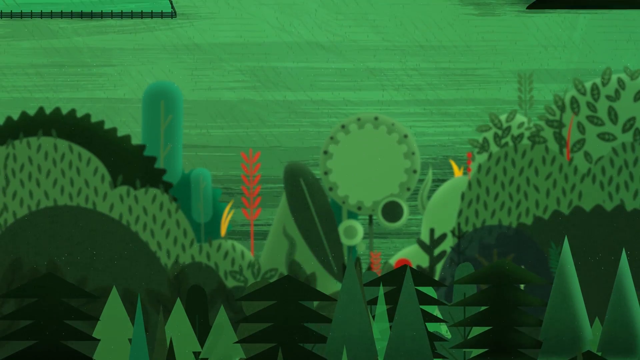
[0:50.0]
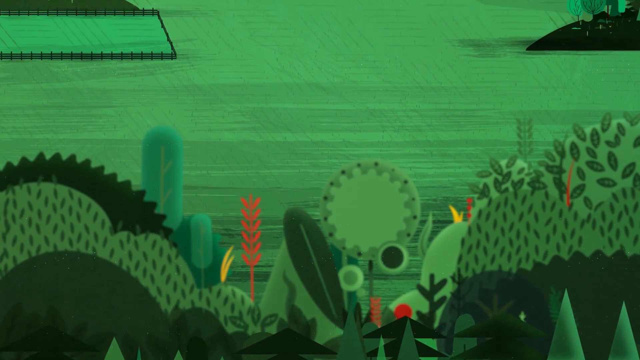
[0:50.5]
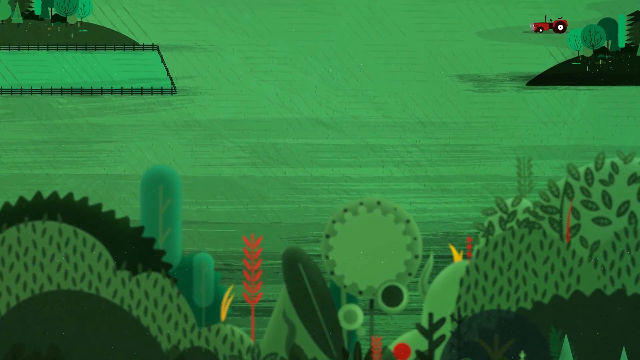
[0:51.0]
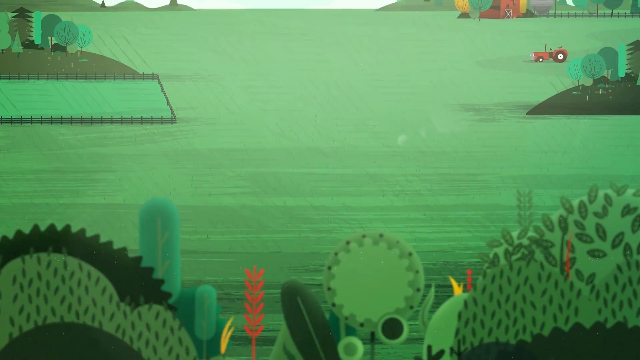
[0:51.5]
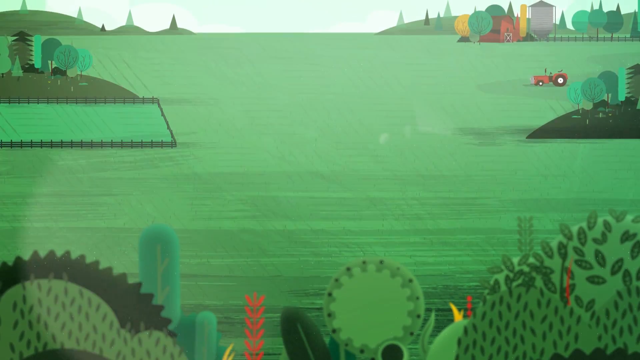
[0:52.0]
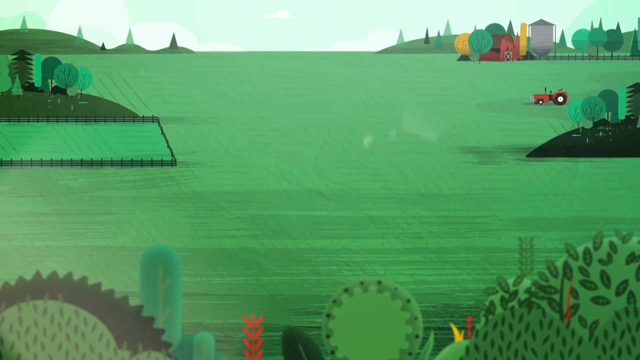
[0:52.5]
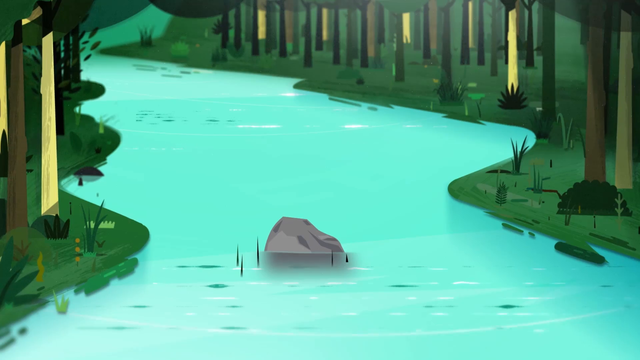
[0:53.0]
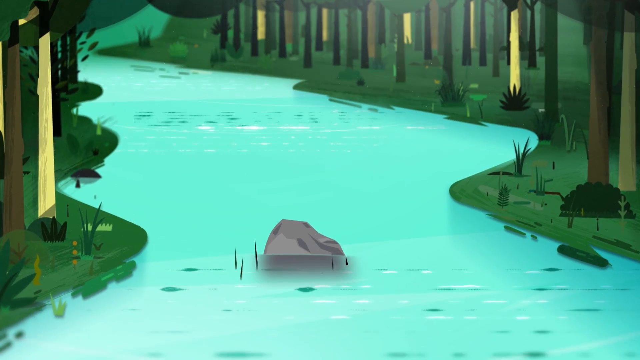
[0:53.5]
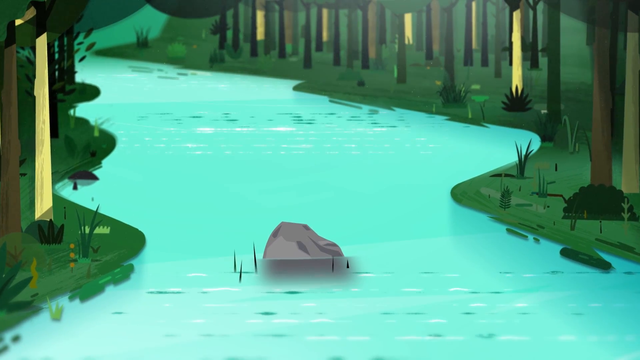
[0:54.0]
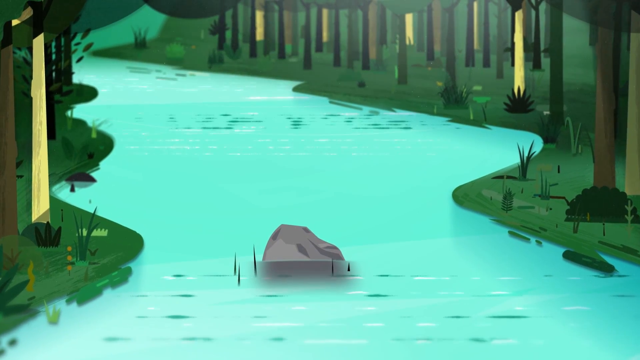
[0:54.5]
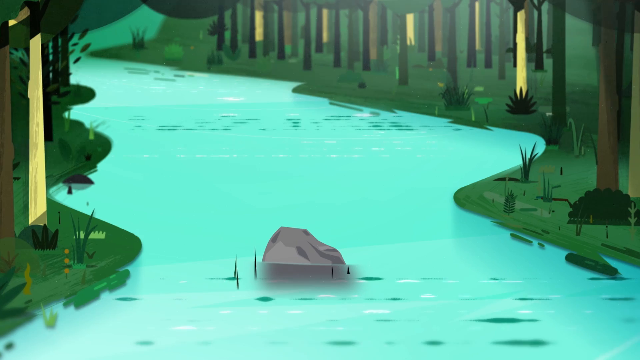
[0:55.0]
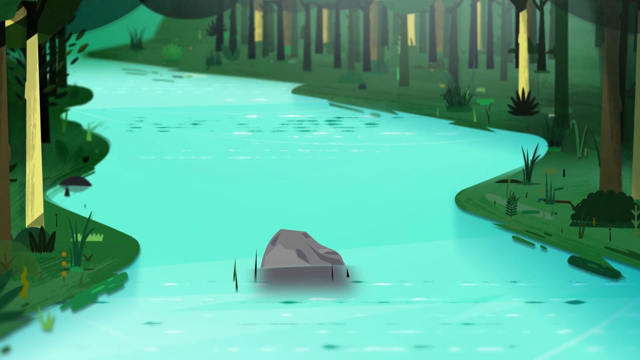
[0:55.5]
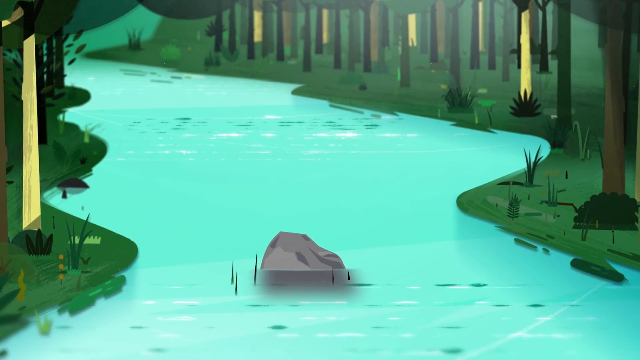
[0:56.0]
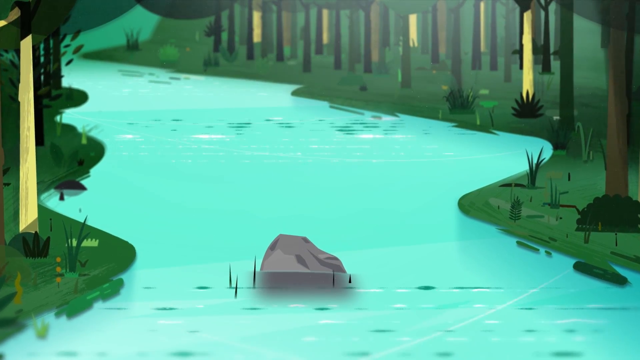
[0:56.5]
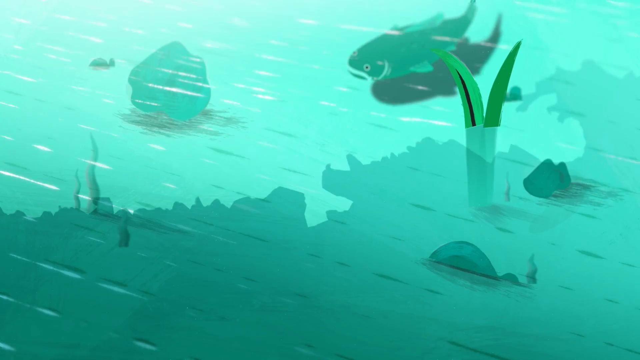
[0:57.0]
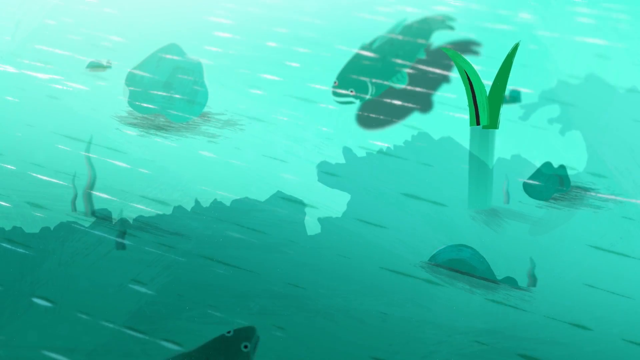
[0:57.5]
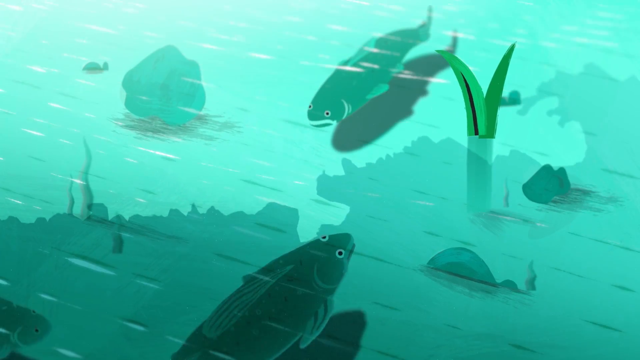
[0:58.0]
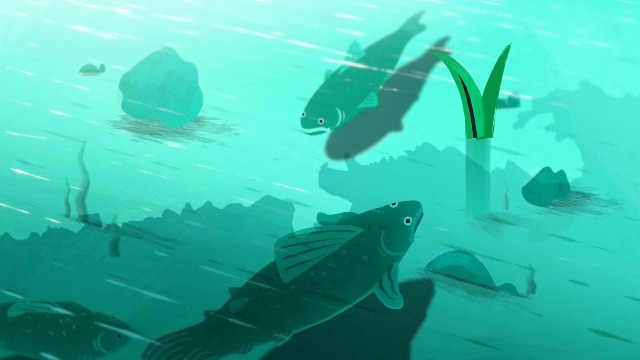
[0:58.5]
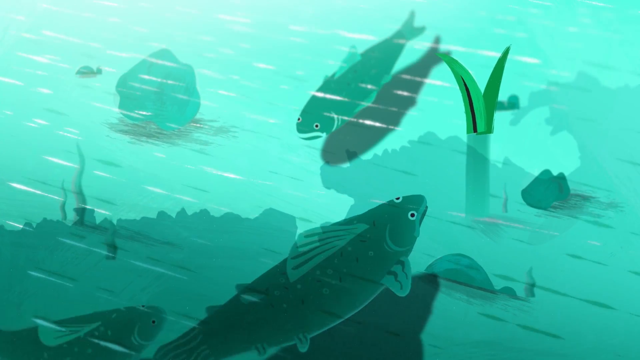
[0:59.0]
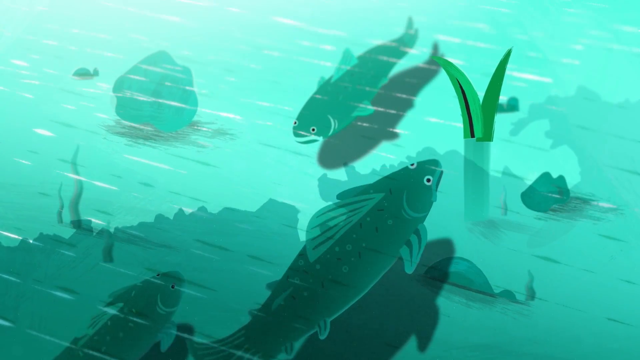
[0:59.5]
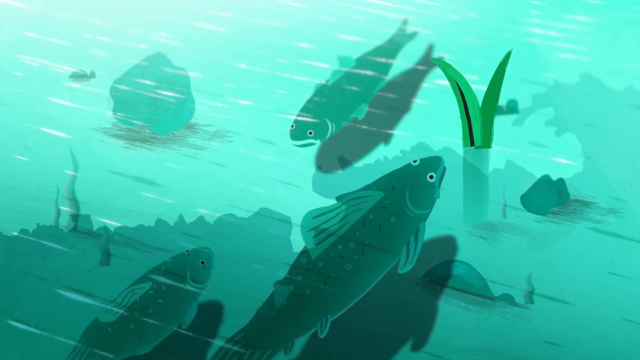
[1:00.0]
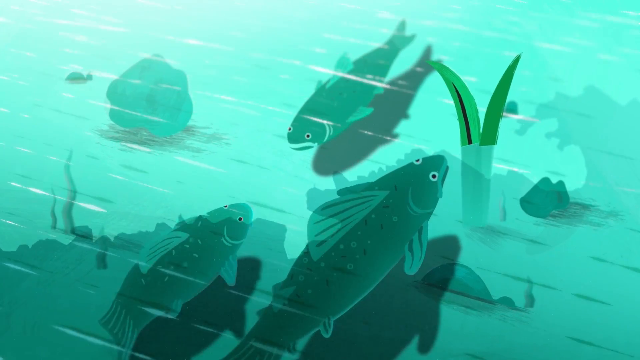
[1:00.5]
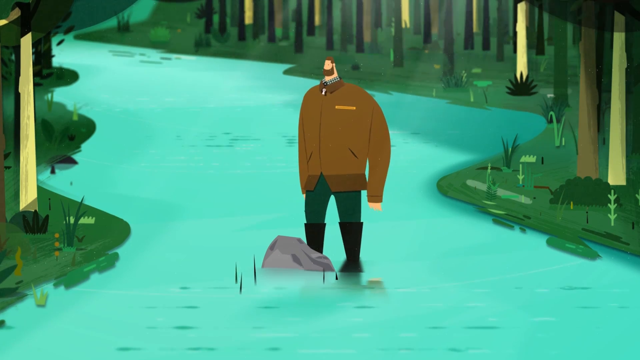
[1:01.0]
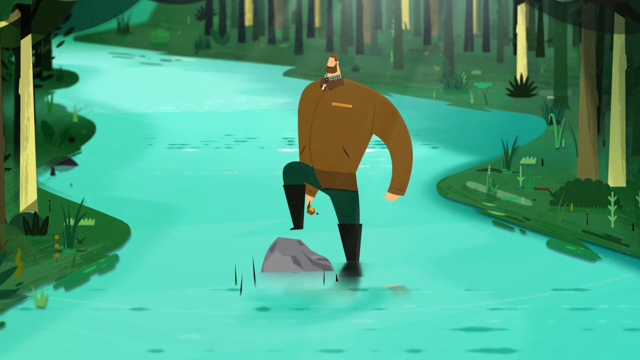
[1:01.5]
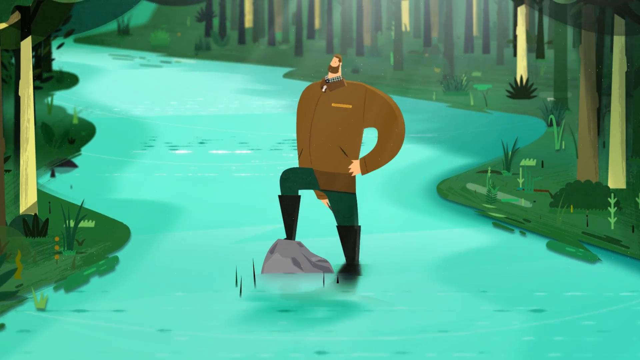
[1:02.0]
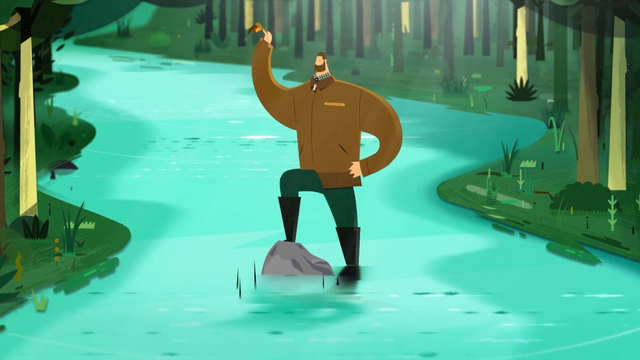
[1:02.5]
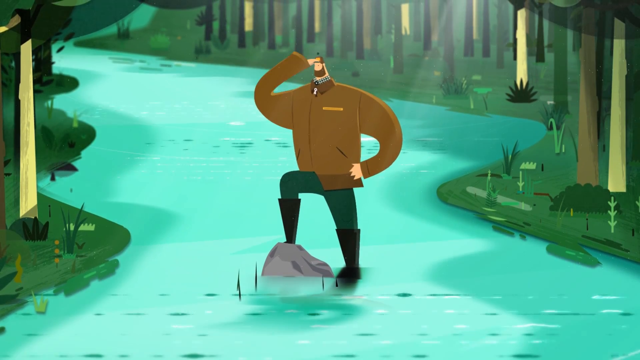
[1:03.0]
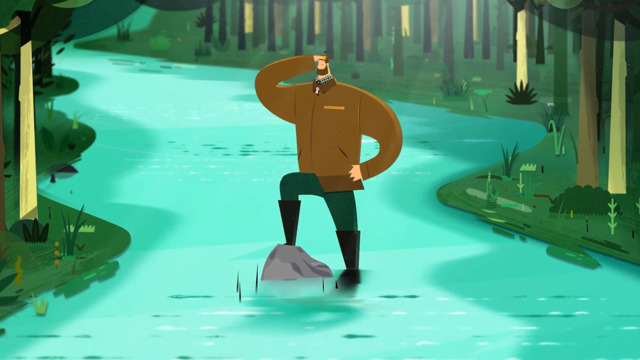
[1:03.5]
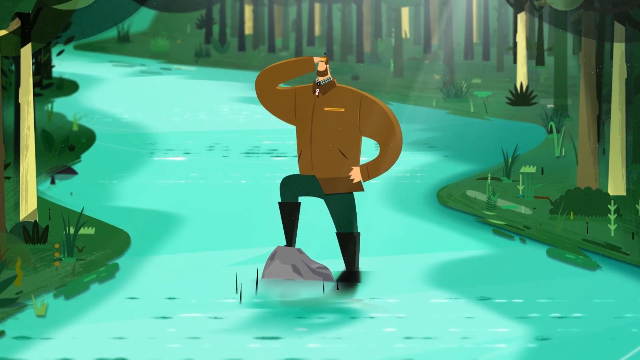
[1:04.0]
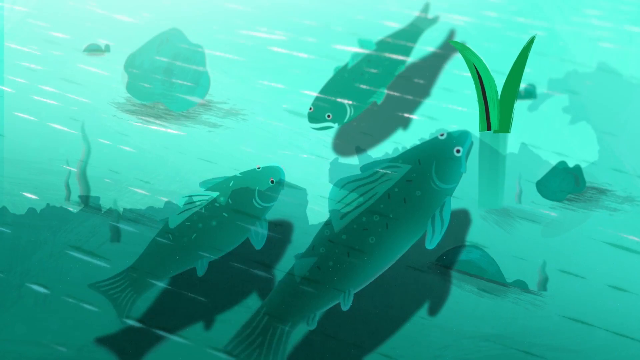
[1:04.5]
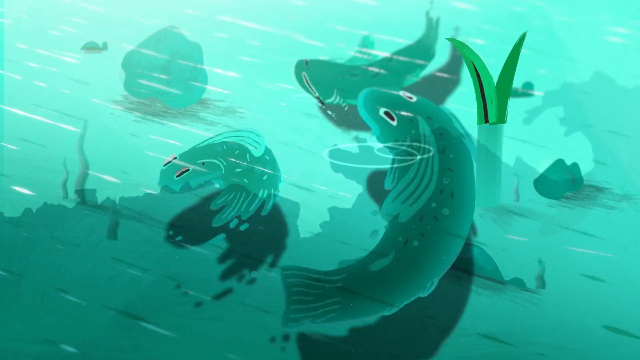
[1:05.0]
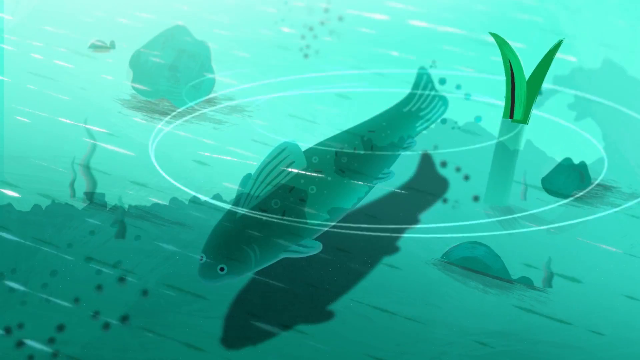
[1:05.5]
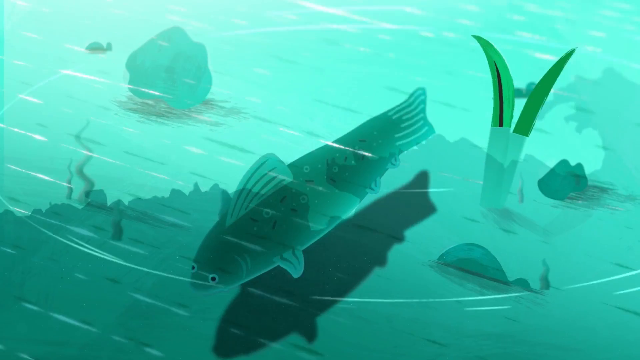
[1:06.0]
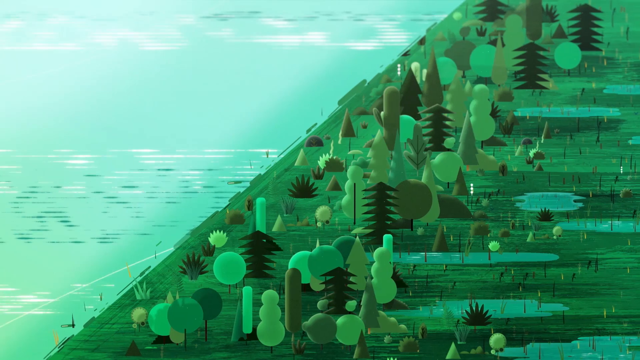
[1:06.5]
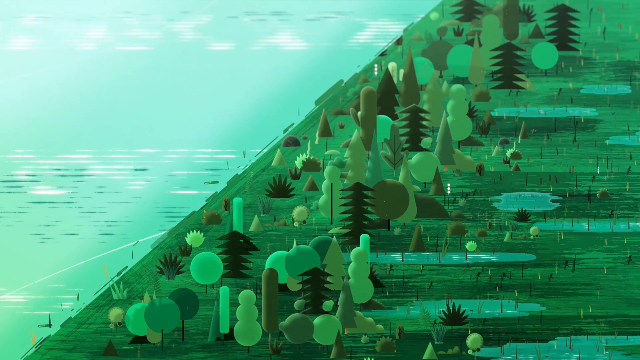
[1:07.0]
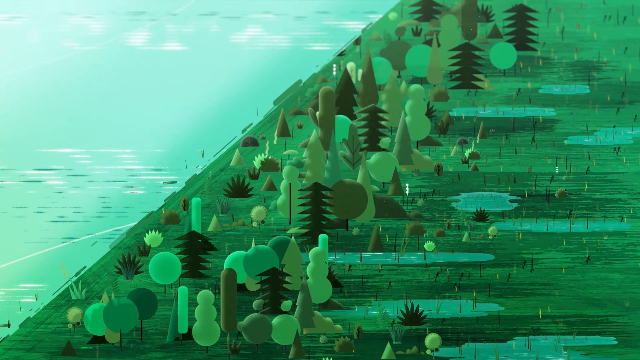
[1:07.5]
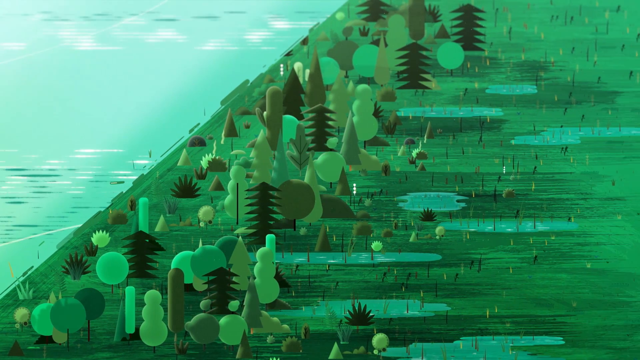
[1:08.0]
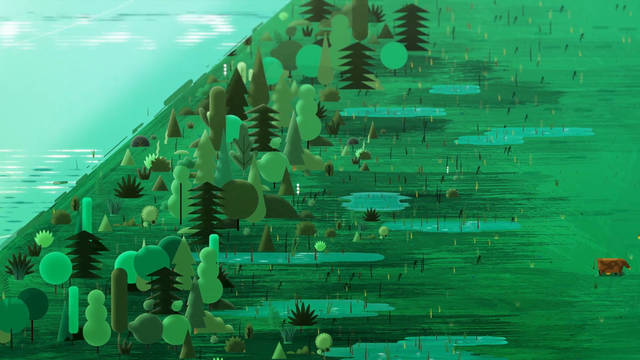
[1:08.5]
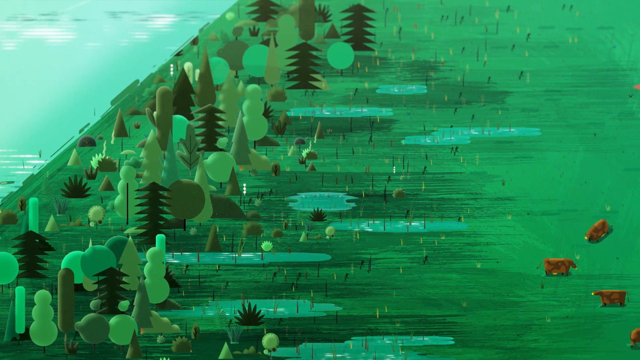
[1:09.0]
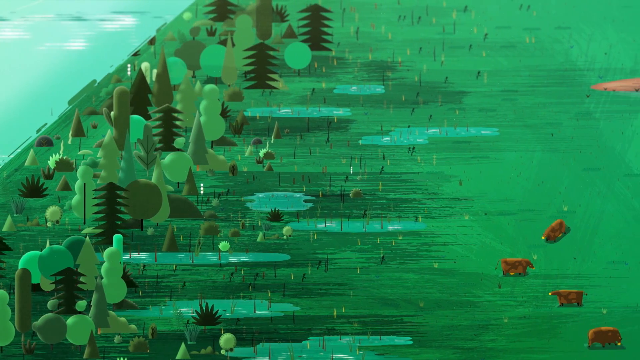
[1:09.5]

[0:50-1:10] A panning shot moves from bottom to top, showing a bunch of plants in the foreground and the farm from earlier in the background on the right side. On the left side is what looks like a fenced-in area, and behind it a bit of a hill with some trees on top. A tractor is in the background on the right side. It cuts to what looks like the lake or stream, with a rock in the middle and greenery and plants to the left and right. Multiple fish are swimming around in the stream. The man is then shown standing with his left foot on top of the rock. He puts his right hand at the top of his head as if viewing something. More fish are seen in the water, and the camera pans from left to right to an overhead shot of the land, from the plants all the way to the brown cows.